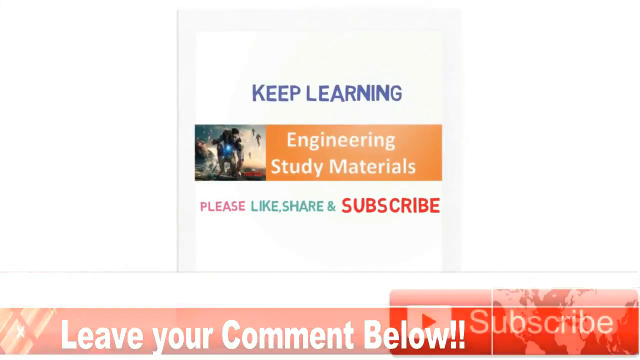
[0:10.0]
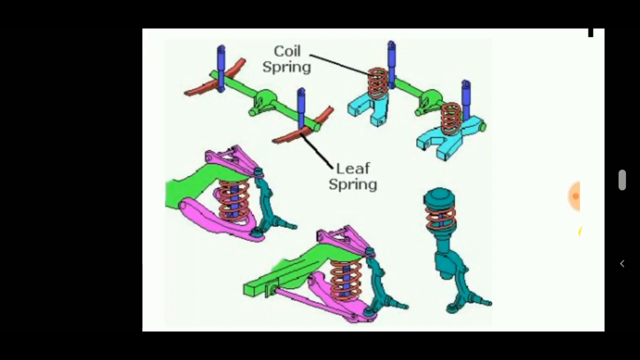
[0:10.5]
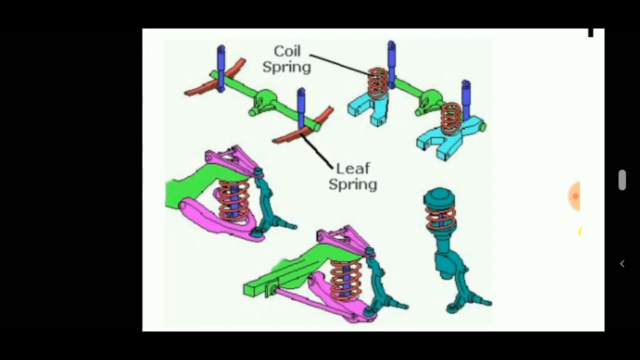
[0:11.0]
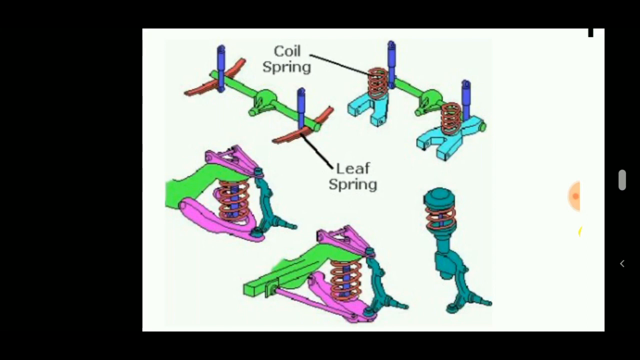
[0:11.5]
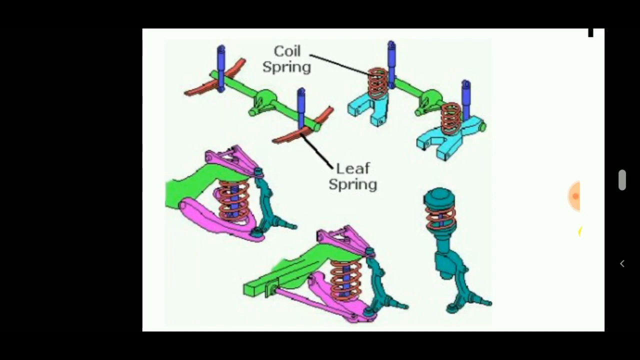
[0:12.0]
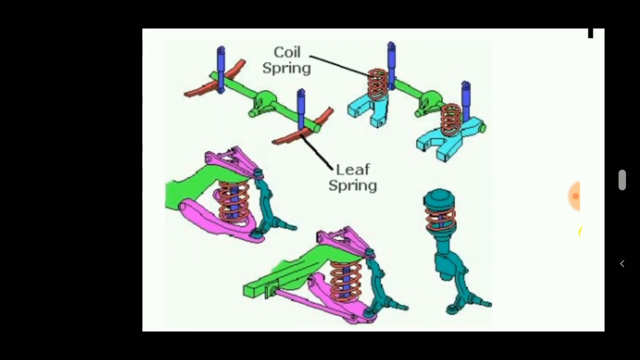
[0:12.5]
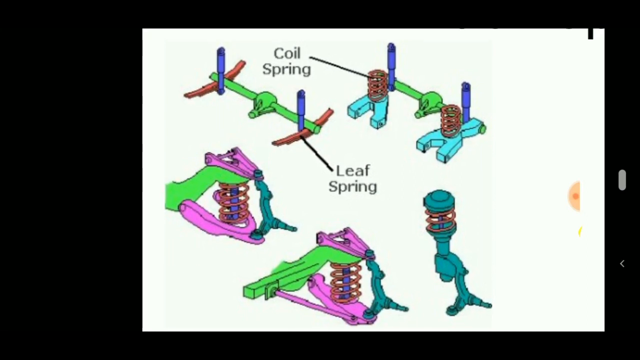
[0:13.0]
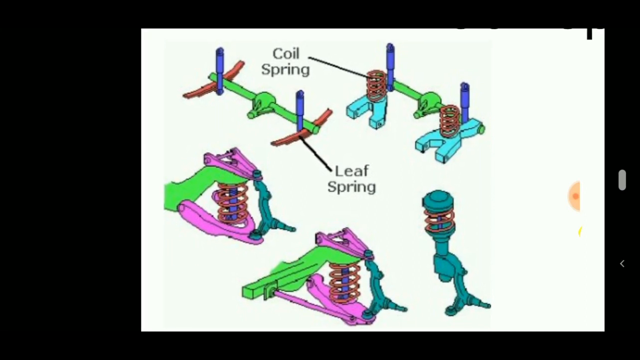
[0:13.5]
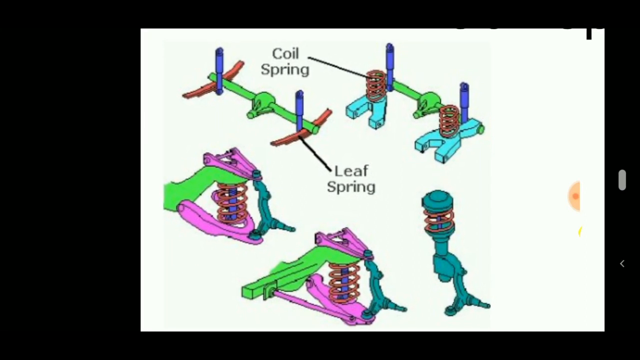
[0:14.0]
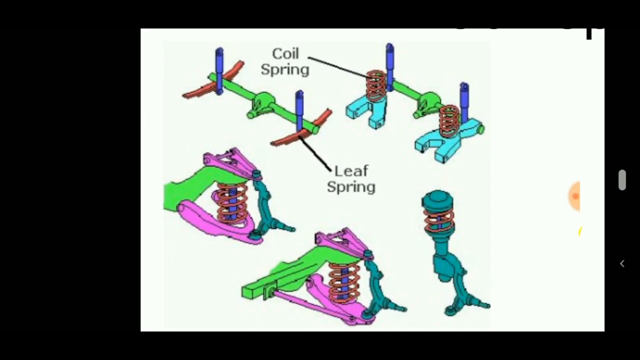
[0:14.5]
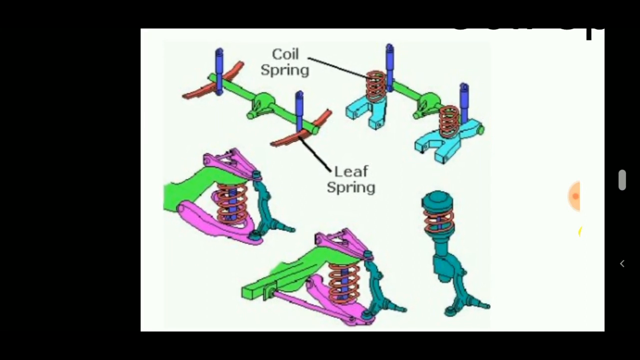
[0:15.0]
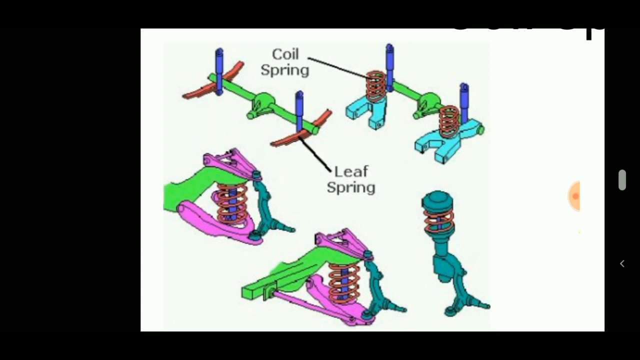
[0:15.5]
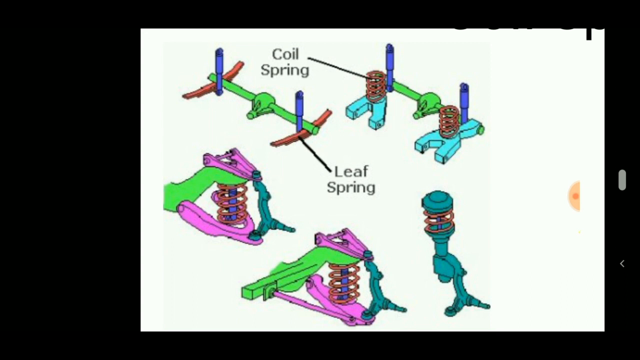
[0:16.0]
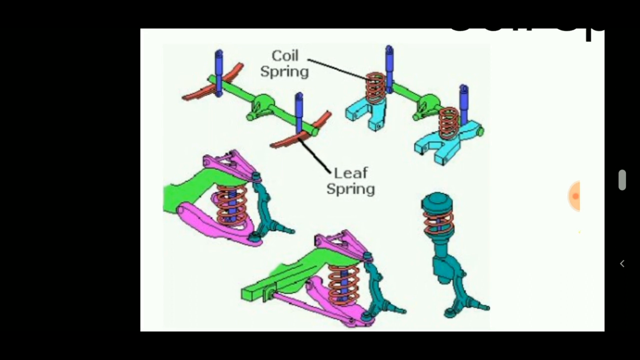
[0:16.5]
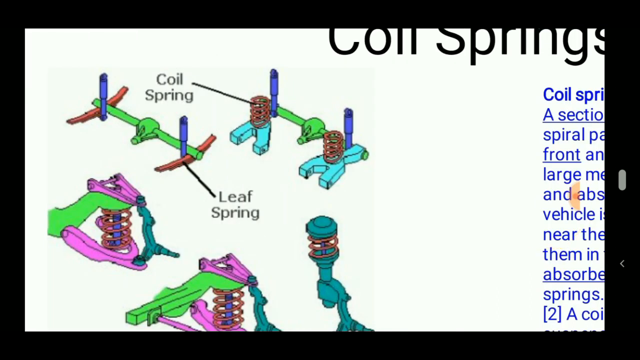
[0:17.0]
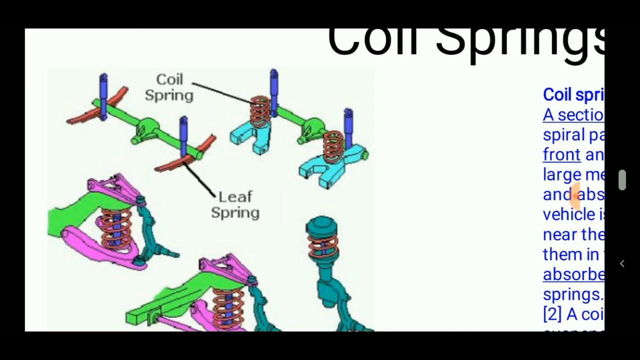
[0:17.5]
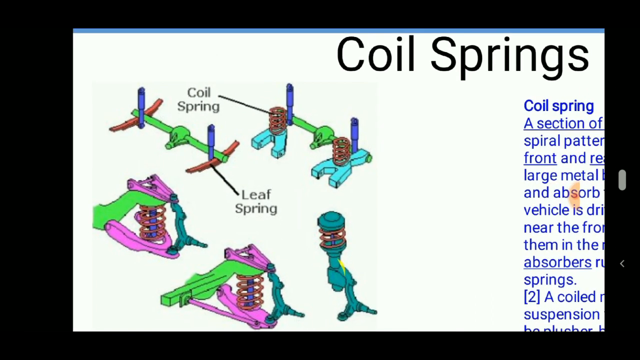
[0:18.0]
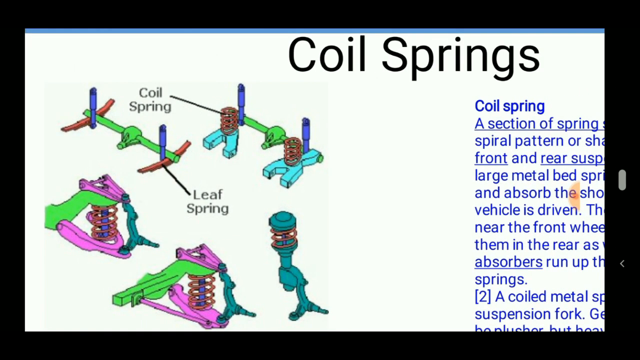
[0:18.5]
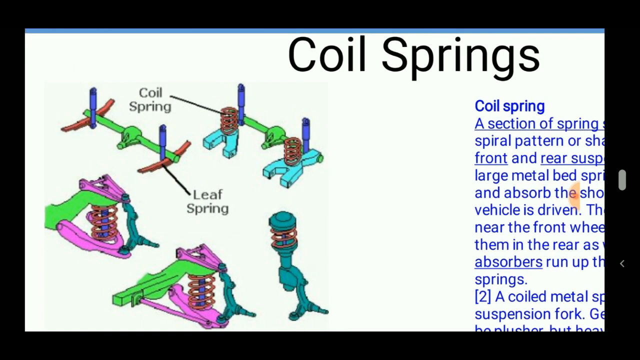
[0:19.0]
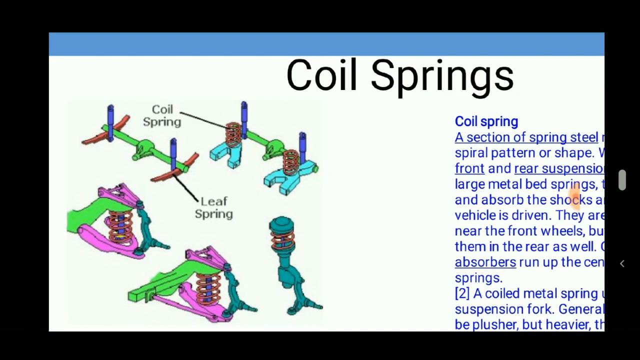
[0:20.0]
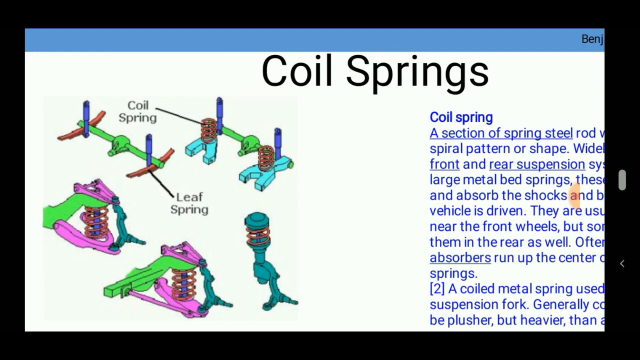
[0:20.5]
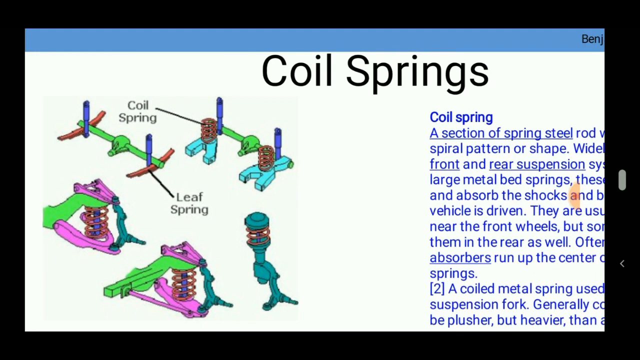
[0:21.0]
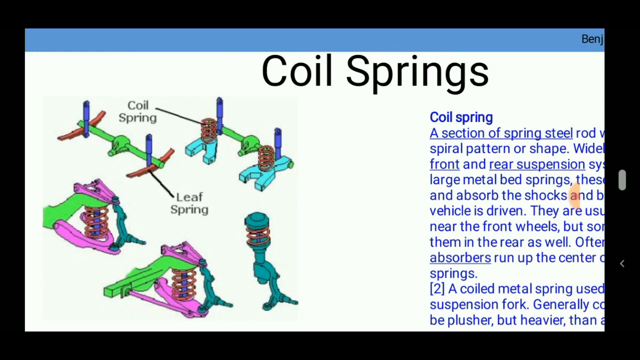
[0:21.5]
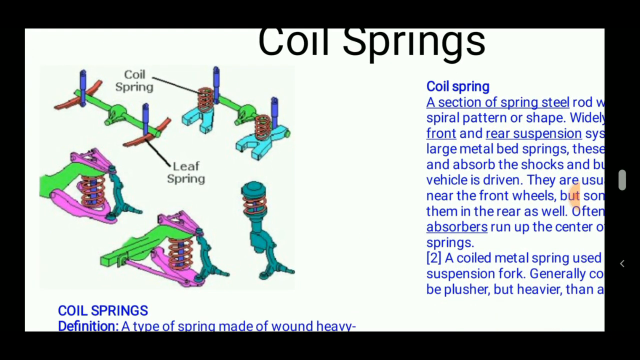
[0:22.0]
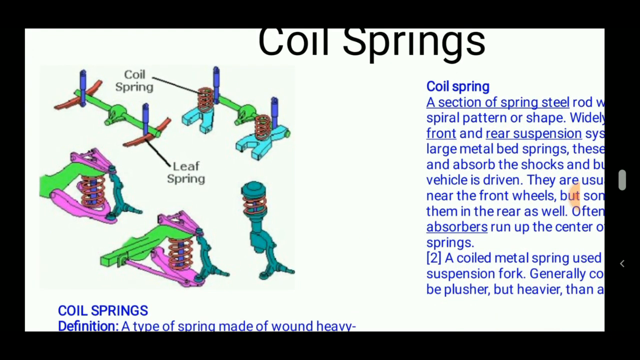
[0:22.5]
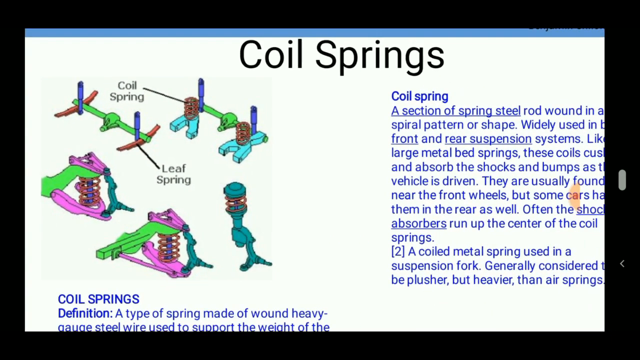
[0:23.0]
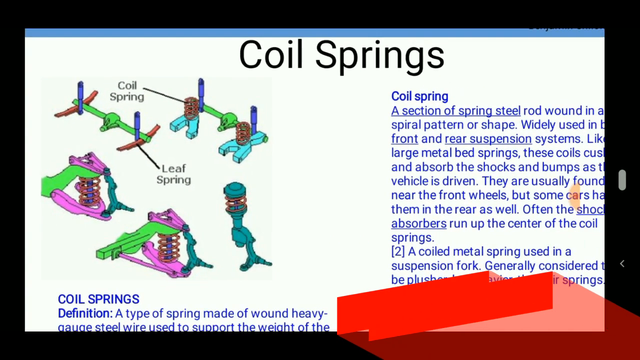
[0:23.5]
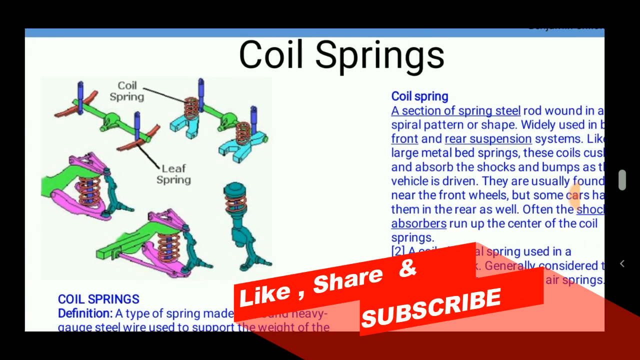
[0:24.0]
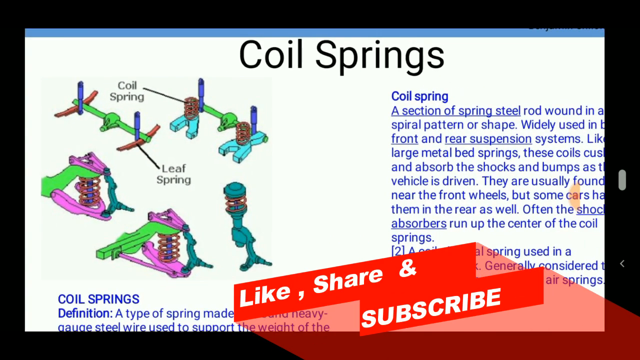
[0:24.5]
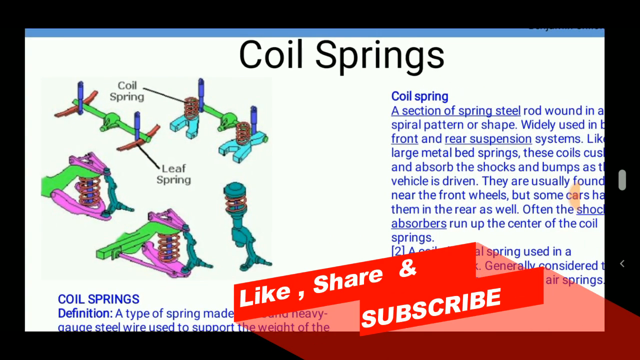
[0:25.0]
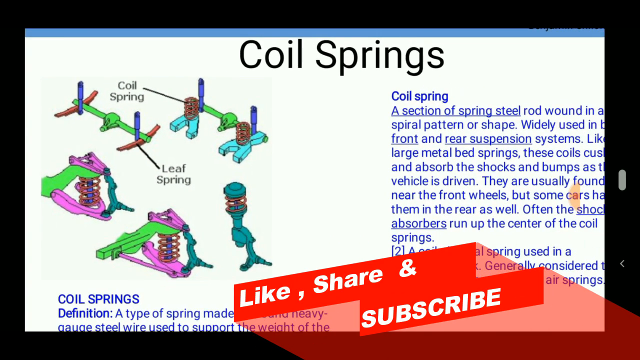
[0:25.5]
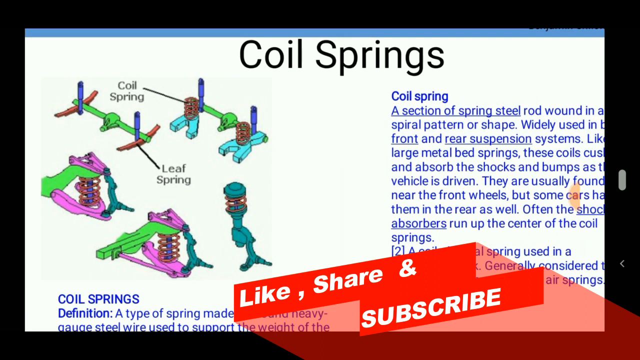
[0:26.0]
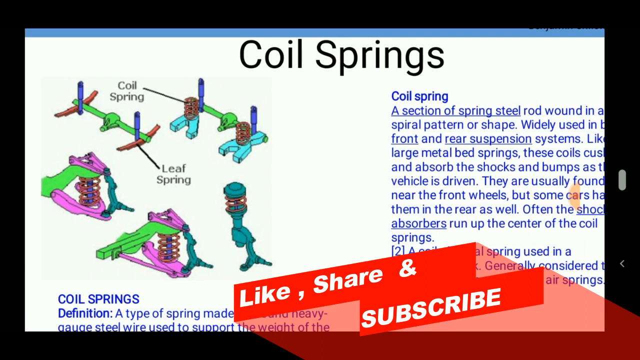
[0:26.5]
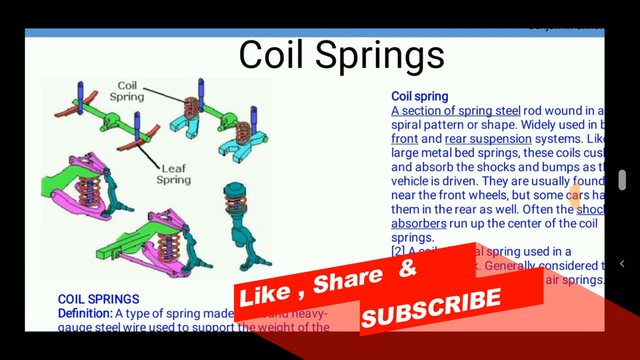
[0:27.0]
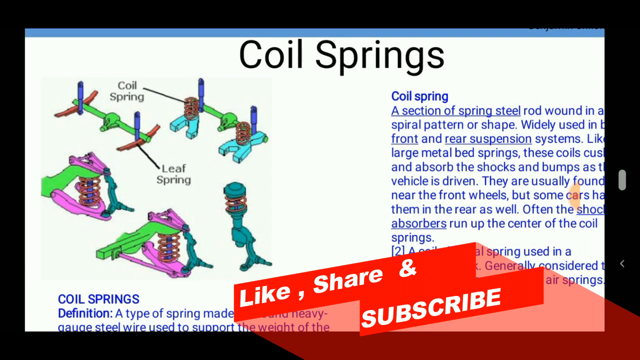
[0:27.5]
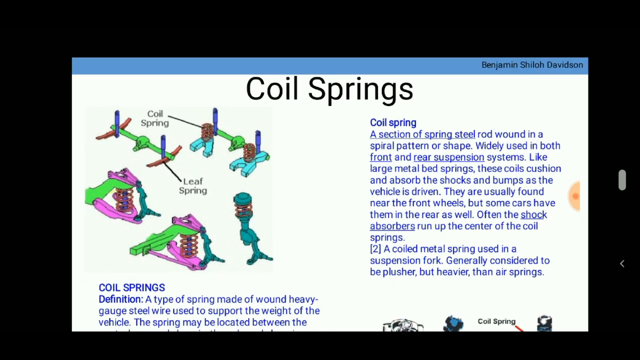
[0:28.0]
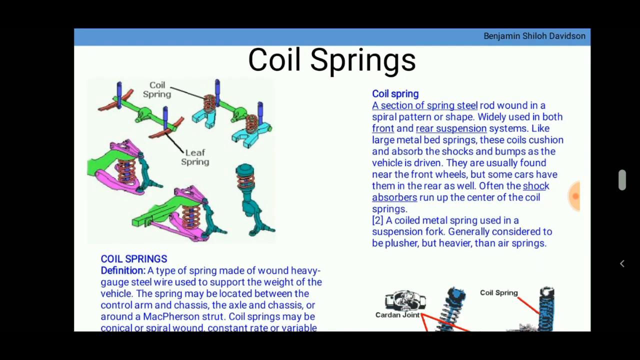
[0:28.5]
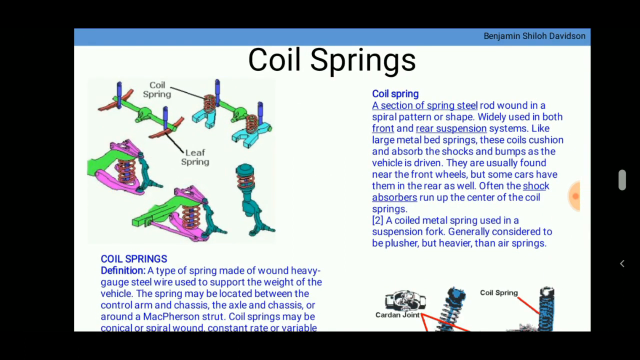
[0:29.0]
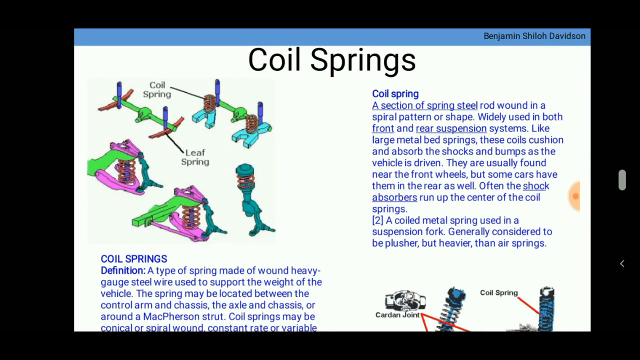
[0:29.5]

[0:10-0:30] Colorful drawings of springs and steel materials appear, labeled "coil spring" and "leaf spring", using green, blue and light blue. Text explains what a coil spring is: "a section of spring steel rod wound in a spiral pattern or shape widely used in the front and rear suspension system", stating that the coils absorb the shocks and bumps as the vehicle is driven, are usually found near the front wheels though some cars have them in the rear as well, and that shock absorbers often run up the center of the coil springs. A definition of coil springs follows: "a type of spring made of wound heavy gauge steel wire used to support the weight of the vehicle", noting that the spring may be located between the control arm and chassis, and that springs may be conical or spiral wound.